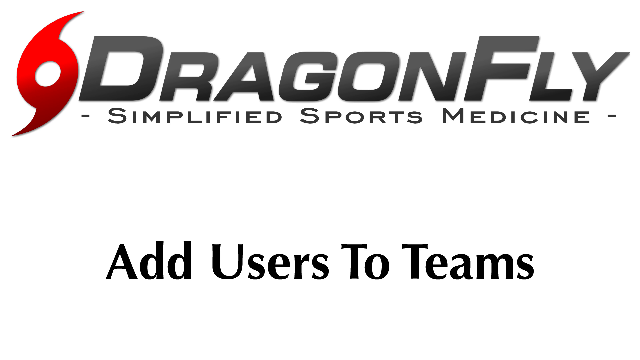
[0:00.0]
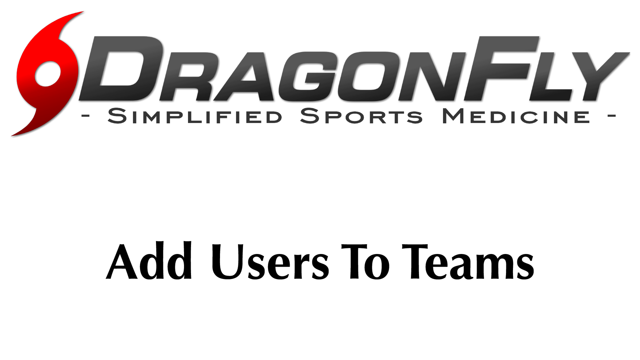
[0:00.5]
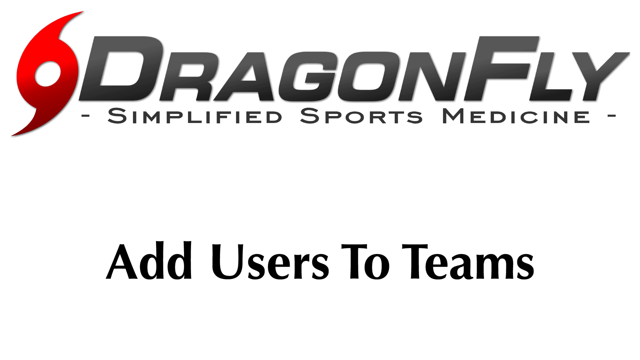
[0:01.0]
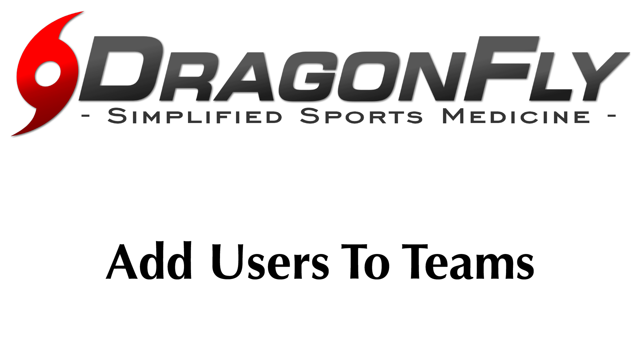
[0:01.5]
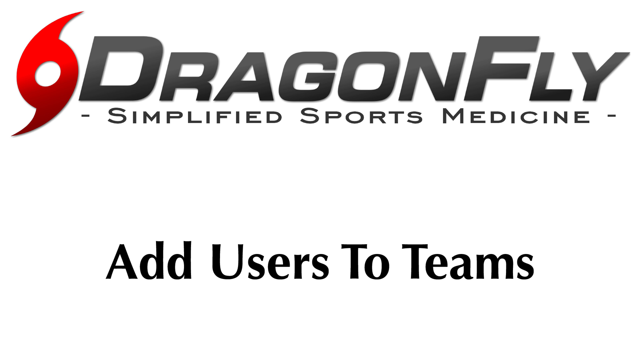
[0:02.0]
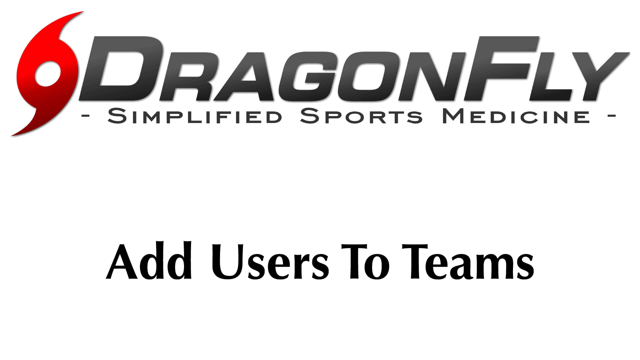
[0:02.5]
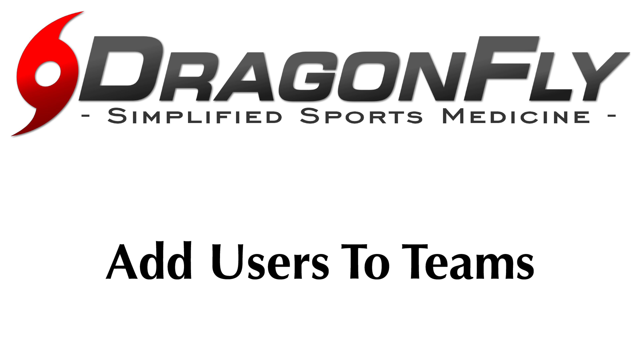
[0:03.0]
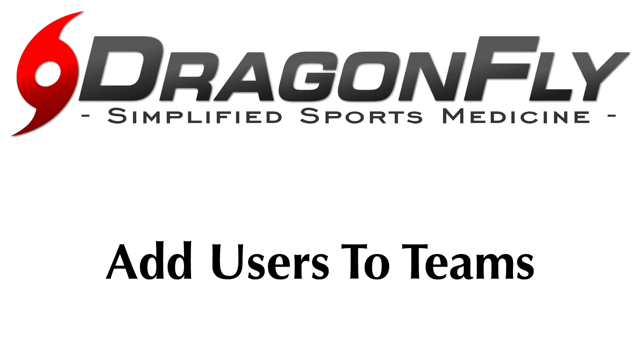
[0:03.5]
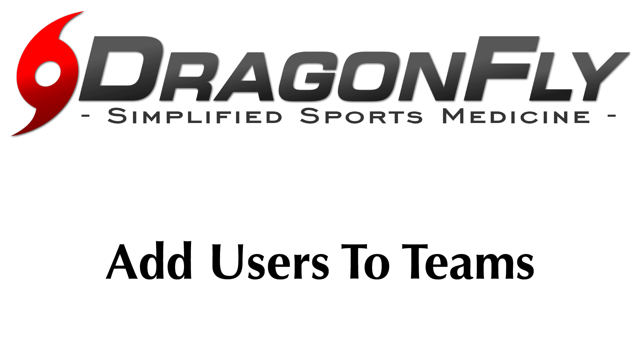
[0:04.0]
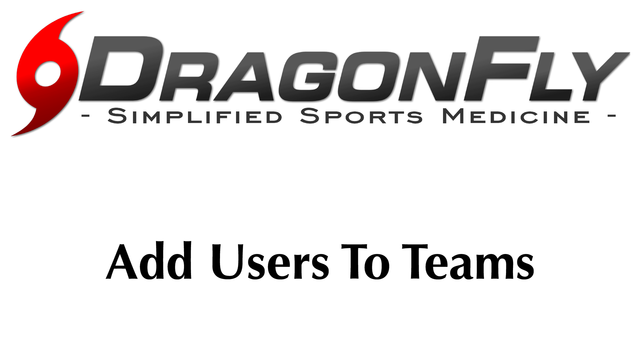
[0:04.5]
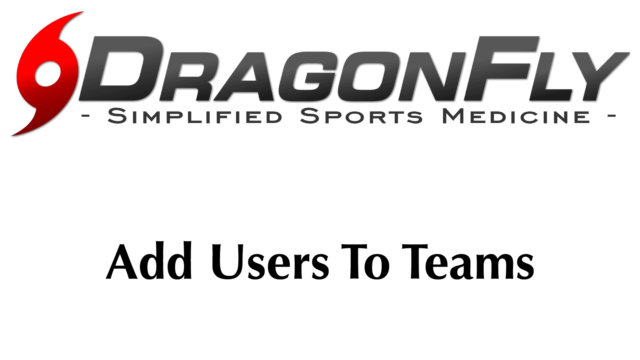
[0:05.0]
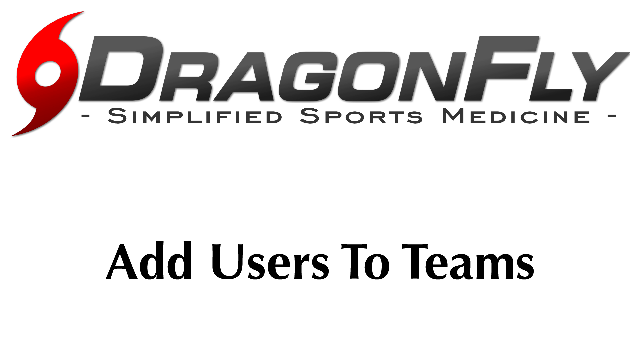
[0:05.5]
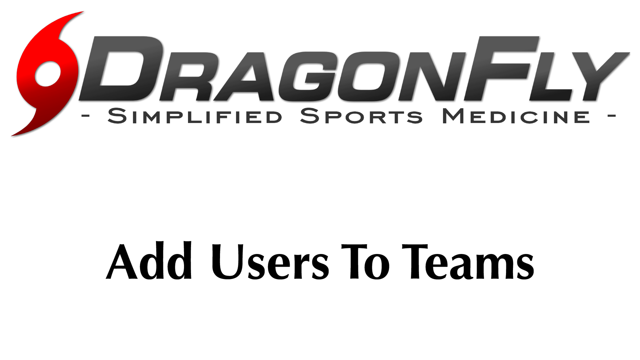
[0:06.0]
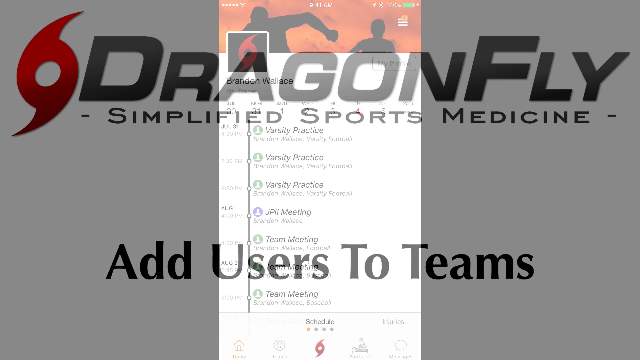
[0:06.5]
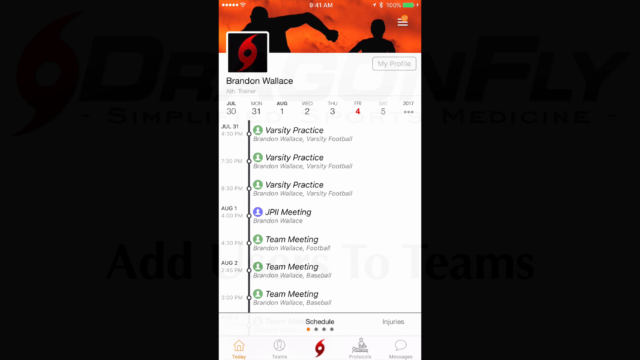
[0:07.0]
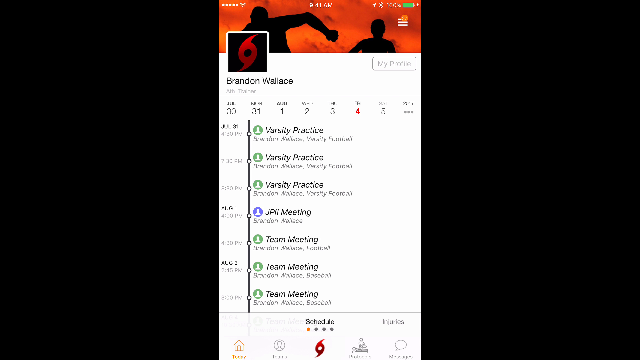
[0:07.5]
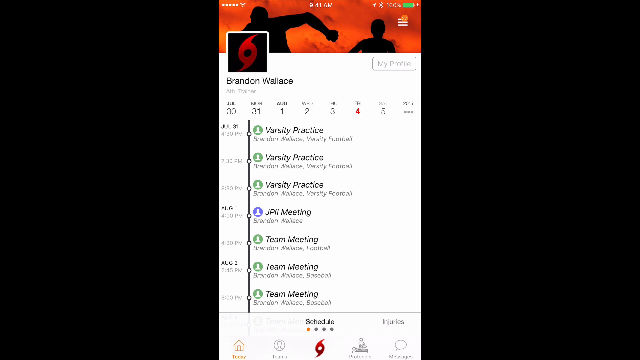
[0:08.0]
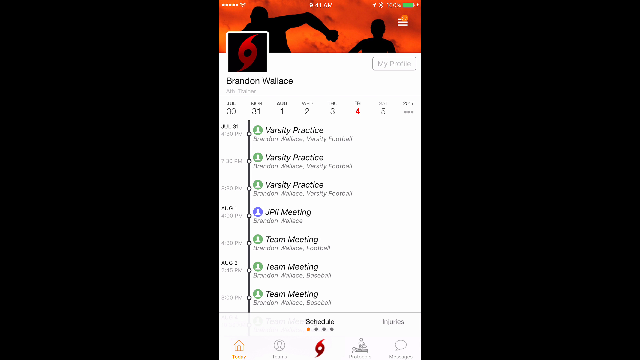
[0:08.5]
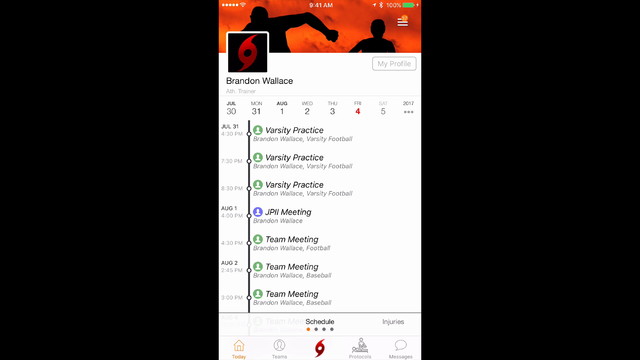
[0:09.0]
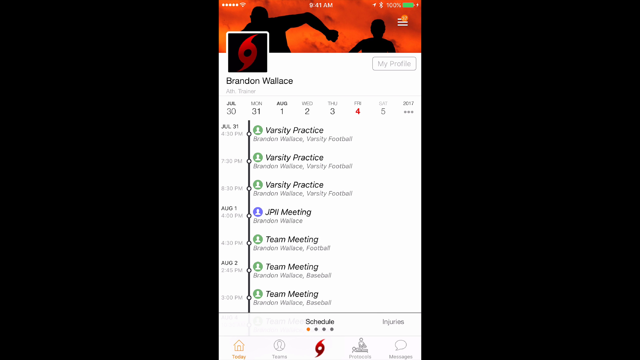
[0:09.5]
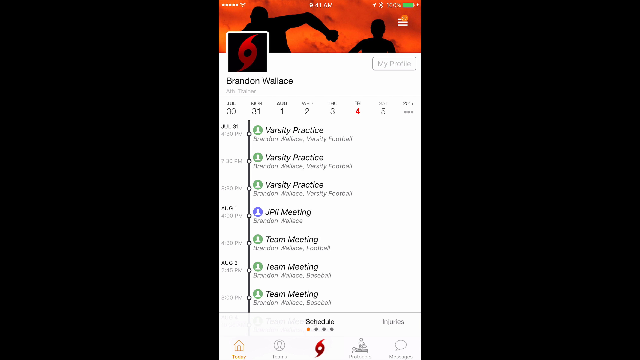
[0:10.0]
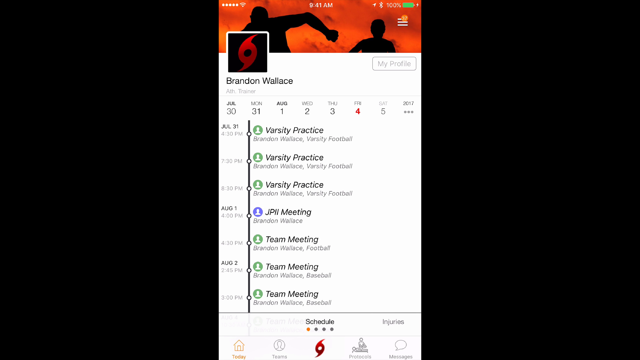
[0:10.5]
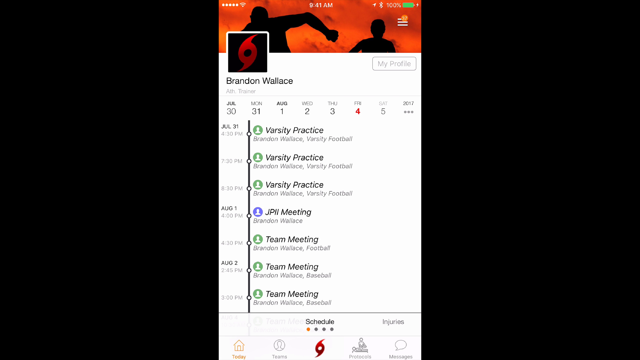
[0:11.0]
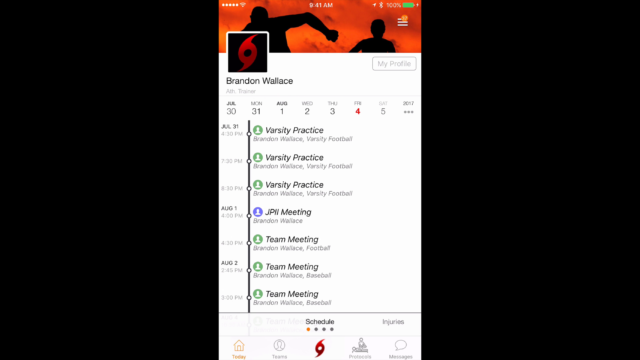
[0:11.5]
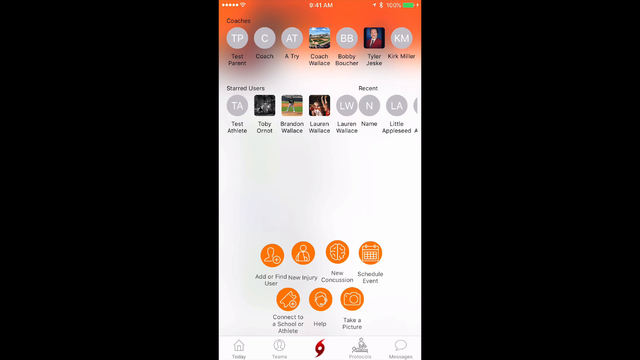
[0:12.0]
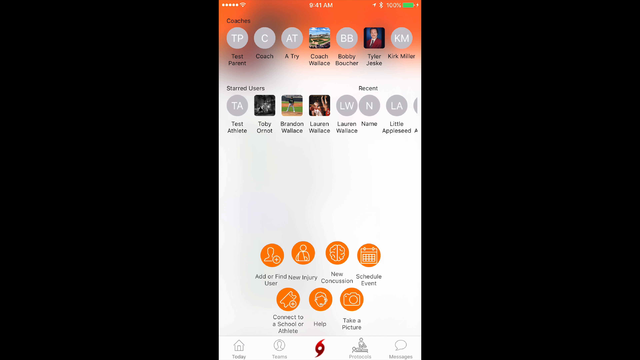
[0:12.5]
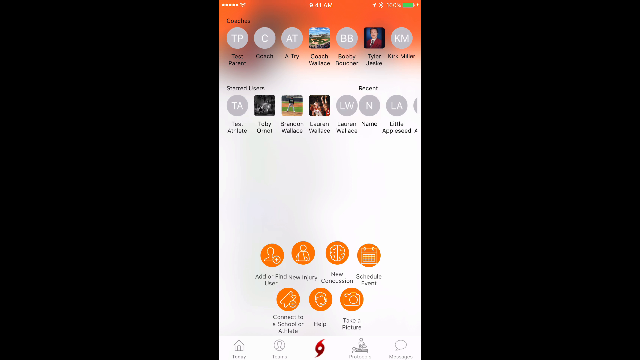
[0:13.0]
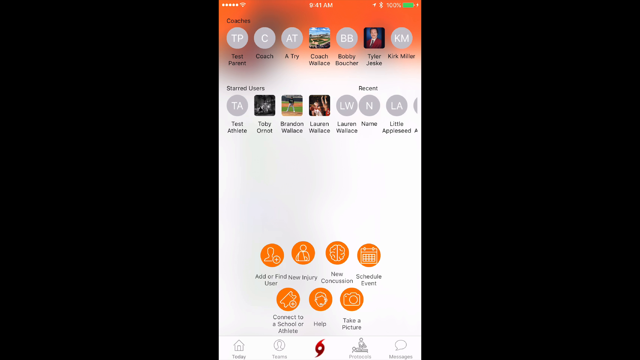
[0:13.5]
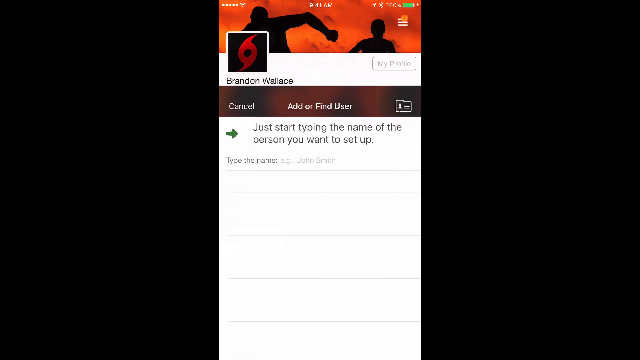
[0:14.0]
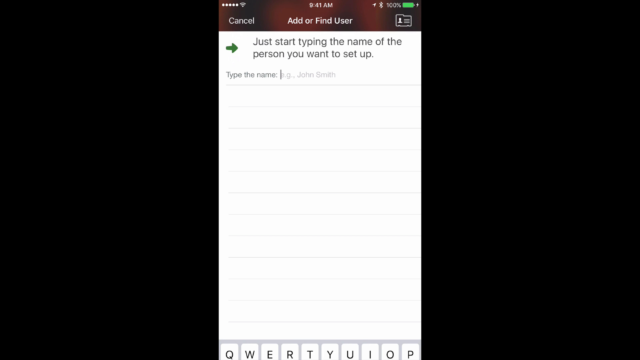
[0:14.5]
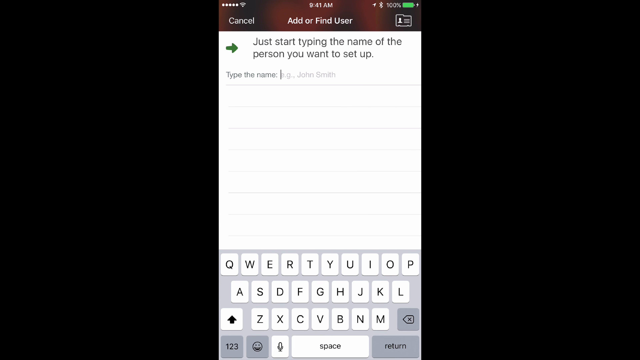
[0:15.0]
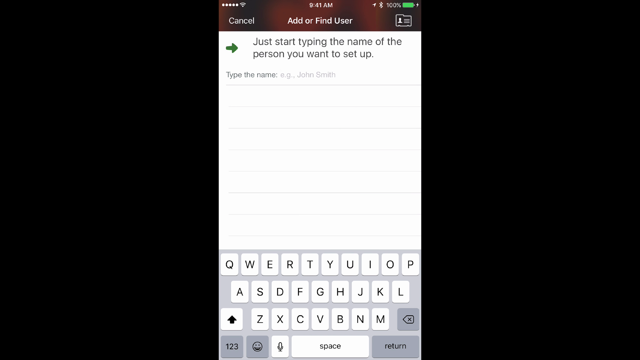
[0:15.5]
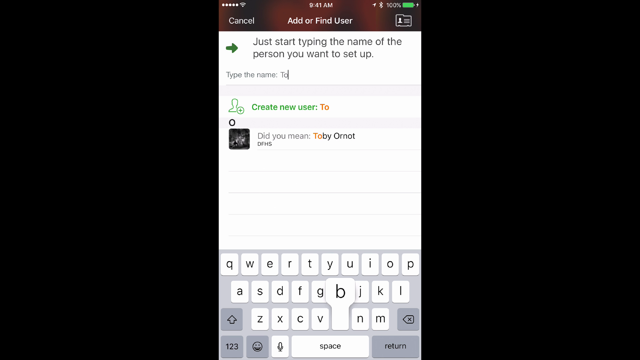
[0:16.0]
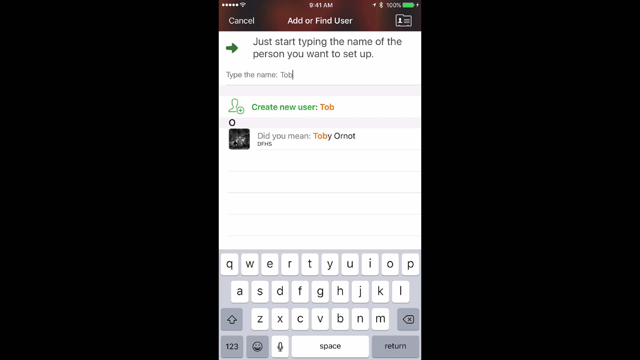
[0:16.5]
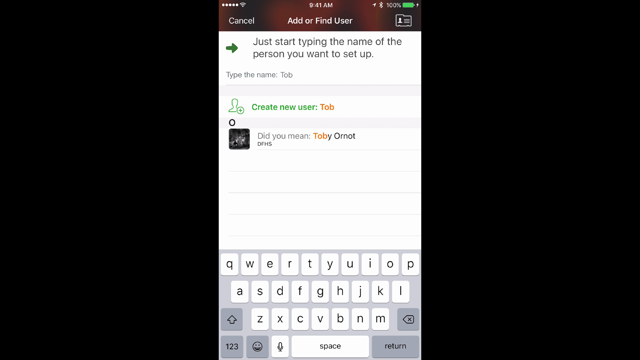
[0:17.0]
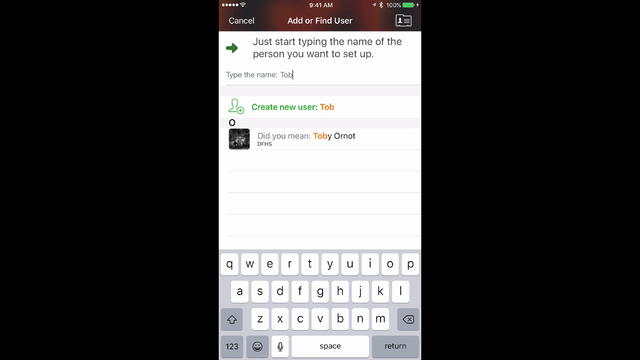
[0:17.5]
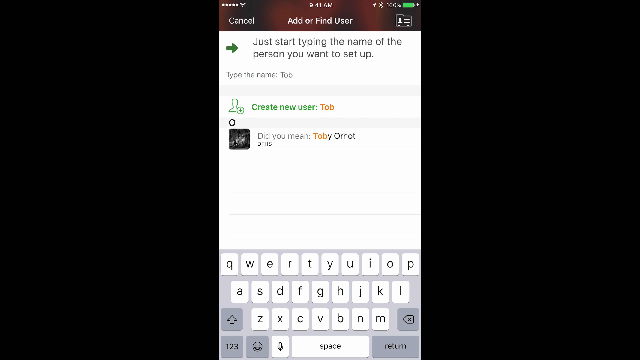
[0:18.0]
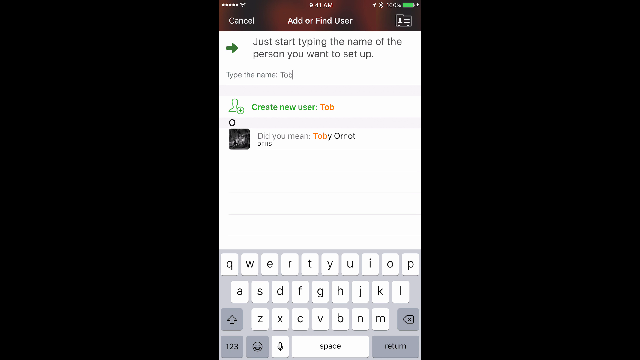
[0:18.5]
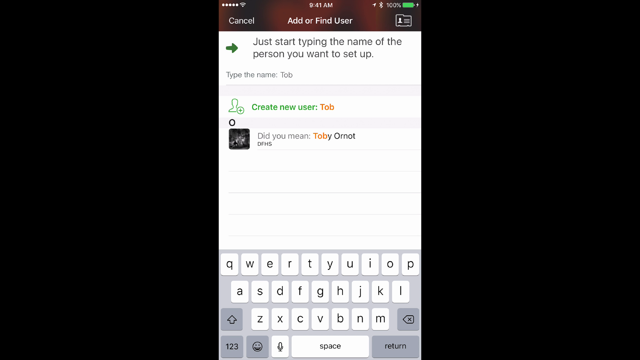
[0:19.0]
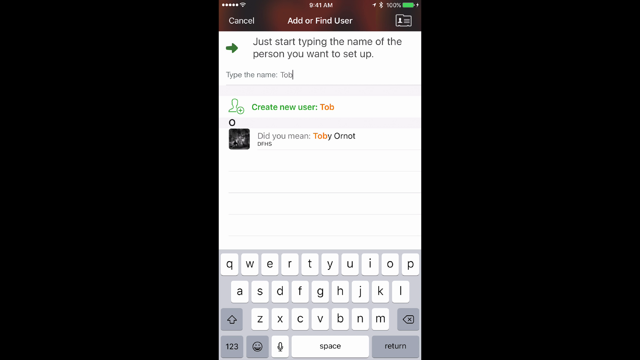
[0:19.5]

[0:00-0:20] The video appears to be for an app or some type of online tool. The app is called Dragonfly, with a logo next to the name, and underneath it says "Add Users to Teams." The next screen shows what appears to be an app page in portrait orientation, longer than it is wide, so it looks like a phone app. It has the name Brandon Wallace and a few dates in what looks like a schedule: "July 31st - varsity practice," "August 1st - team meetings," and what looks like a "JPII" meeting. Each page seems to cover maybe about a week. There is a "new concussion" item, a schedule event button, and two or three buttons on the next line underneath. At the top there is a place with coaches' names, and underneath that a place about "start users." It looks like an app for athletes. There is also a place where you can text.